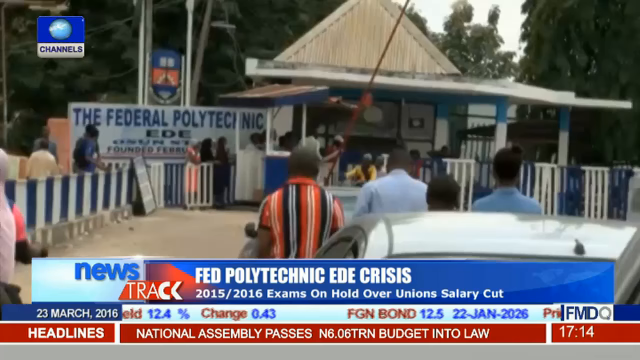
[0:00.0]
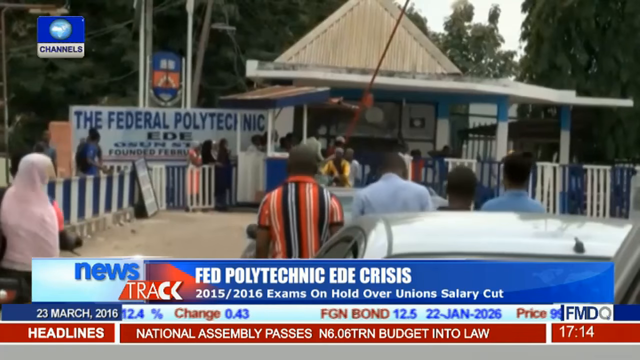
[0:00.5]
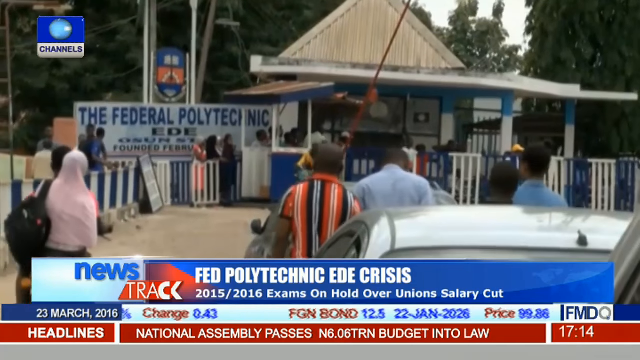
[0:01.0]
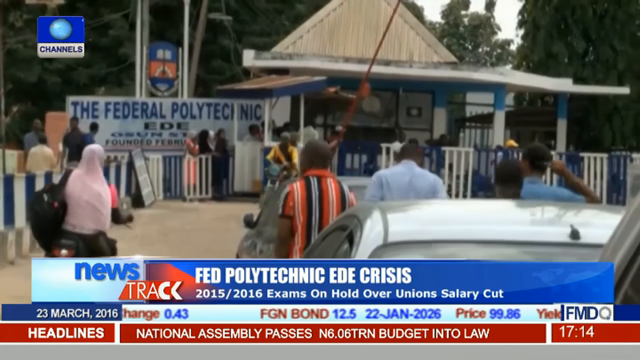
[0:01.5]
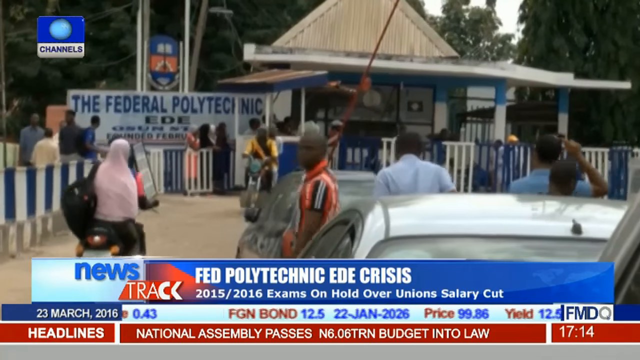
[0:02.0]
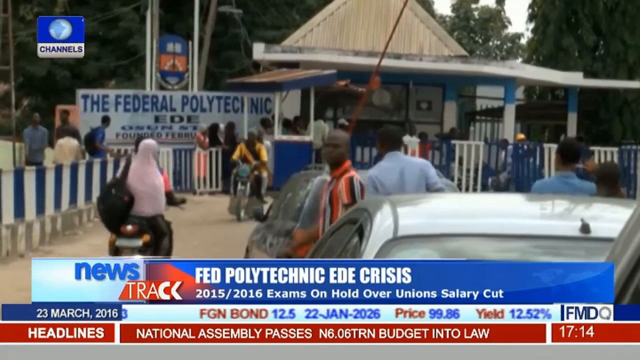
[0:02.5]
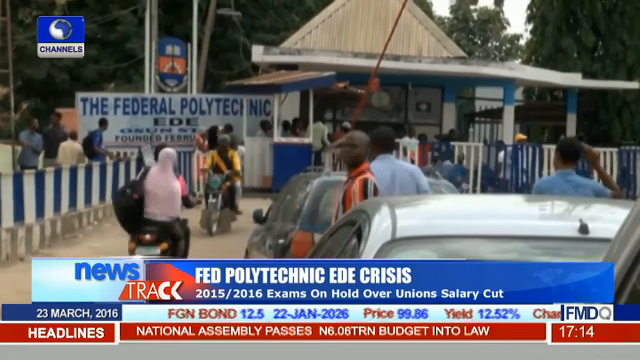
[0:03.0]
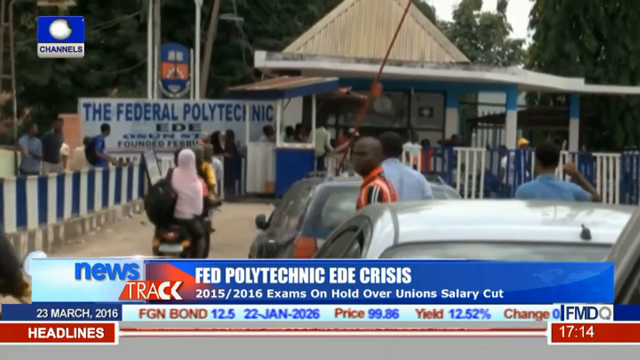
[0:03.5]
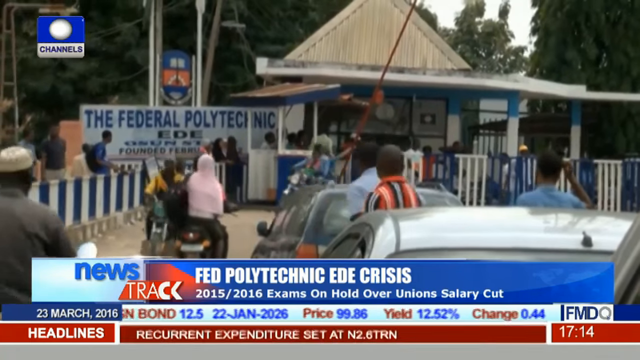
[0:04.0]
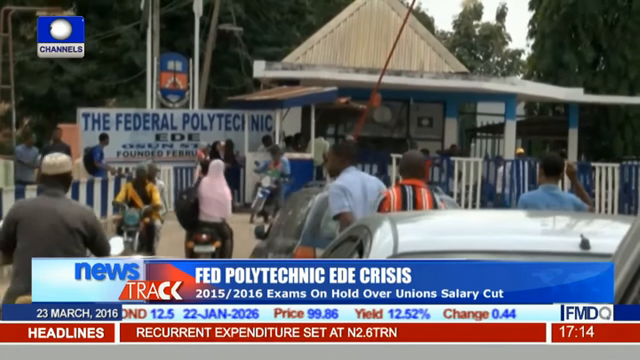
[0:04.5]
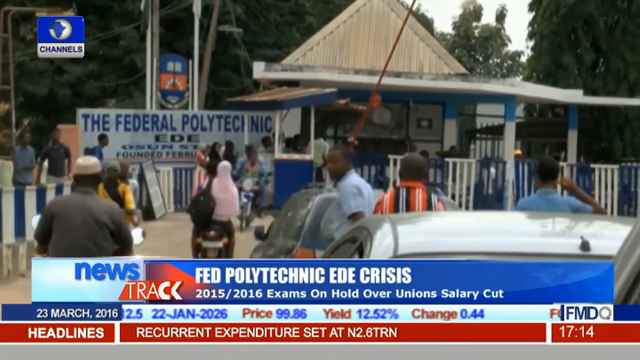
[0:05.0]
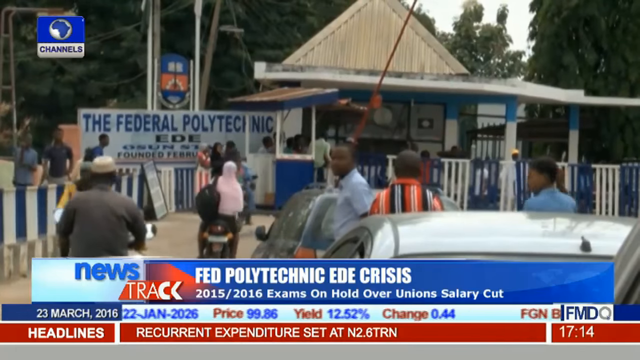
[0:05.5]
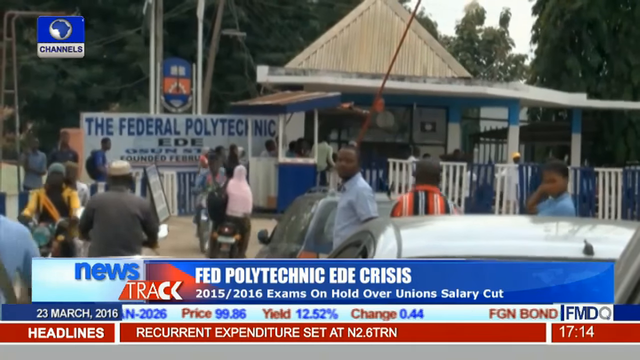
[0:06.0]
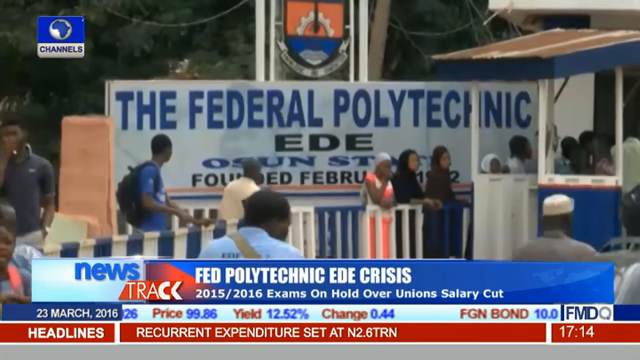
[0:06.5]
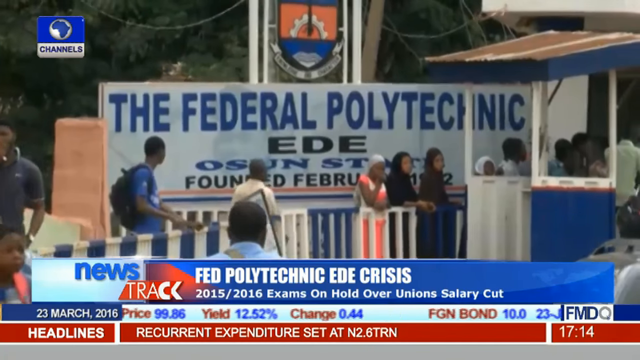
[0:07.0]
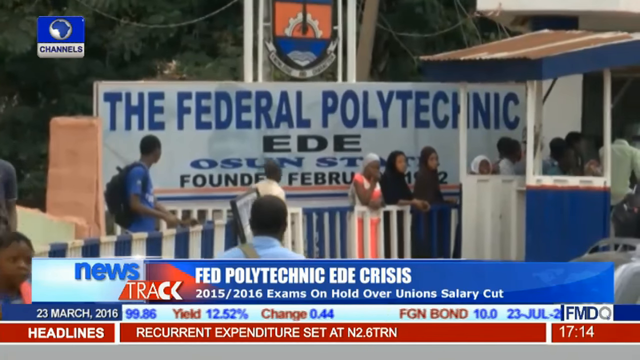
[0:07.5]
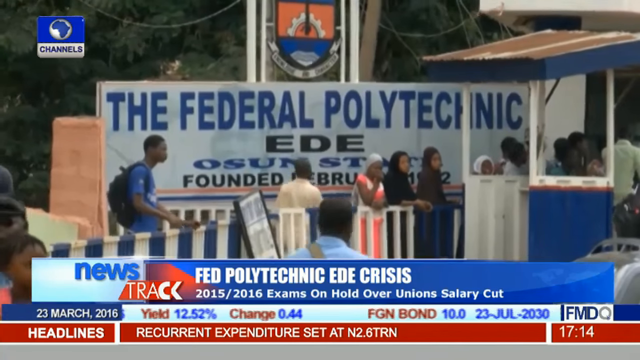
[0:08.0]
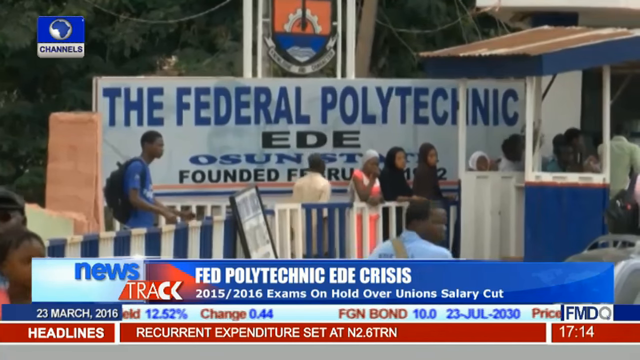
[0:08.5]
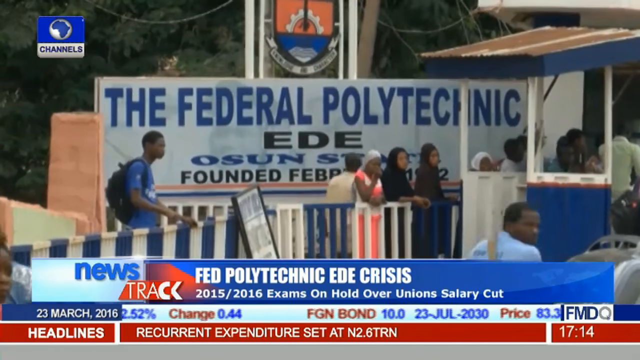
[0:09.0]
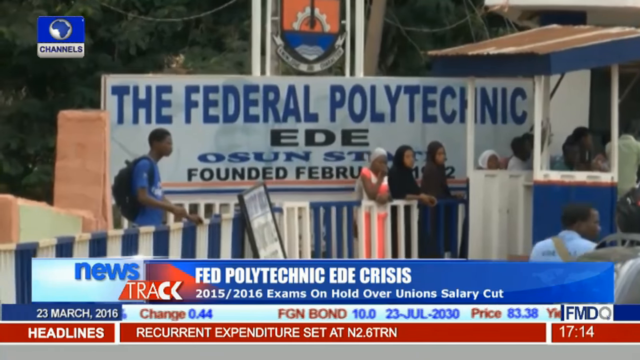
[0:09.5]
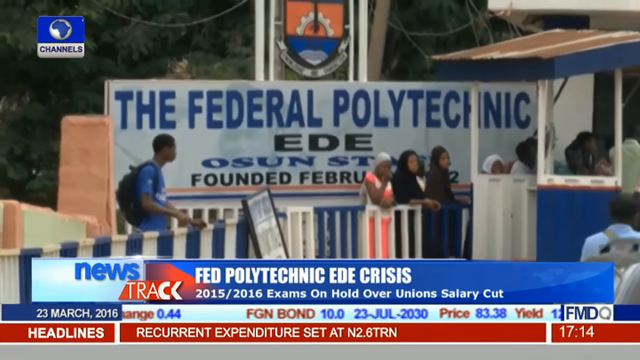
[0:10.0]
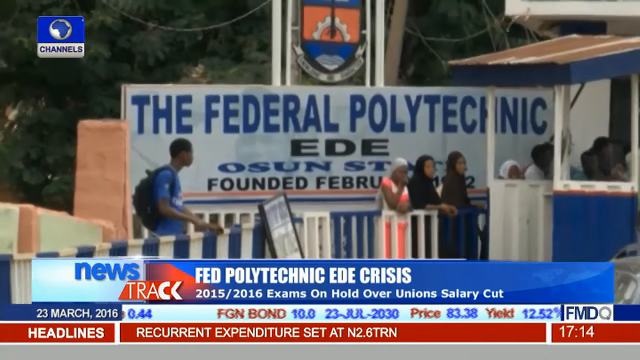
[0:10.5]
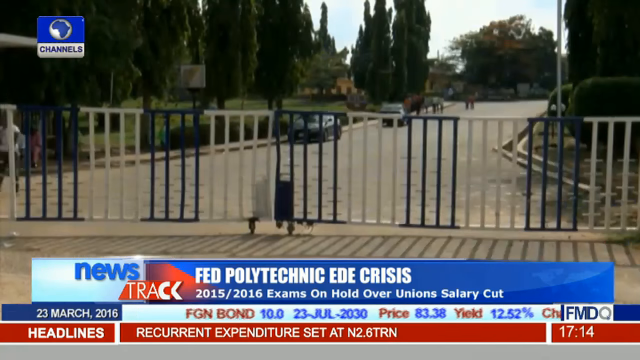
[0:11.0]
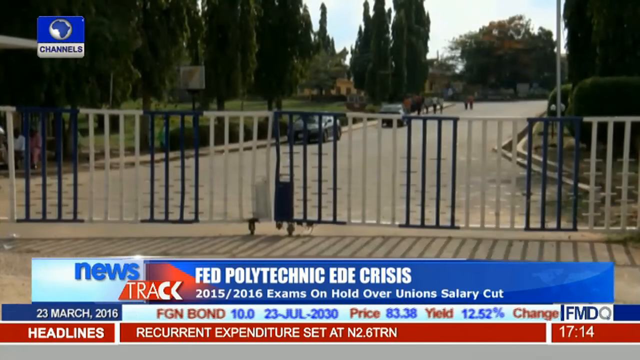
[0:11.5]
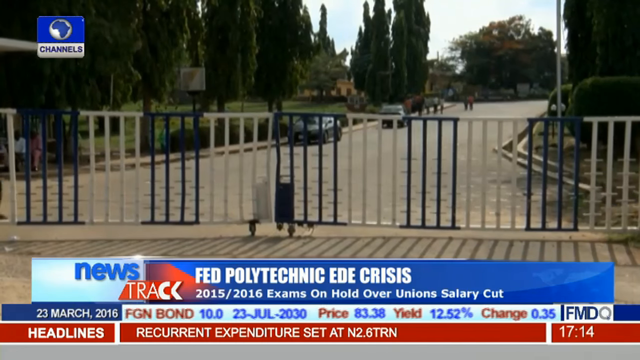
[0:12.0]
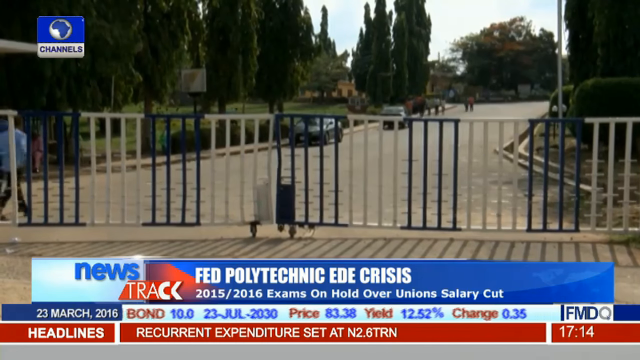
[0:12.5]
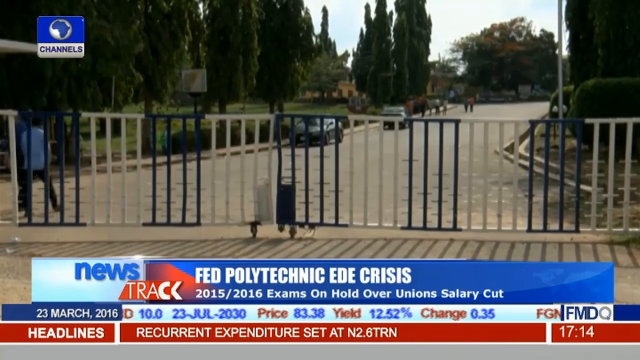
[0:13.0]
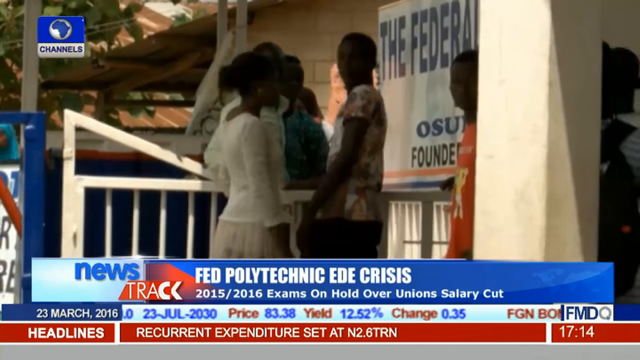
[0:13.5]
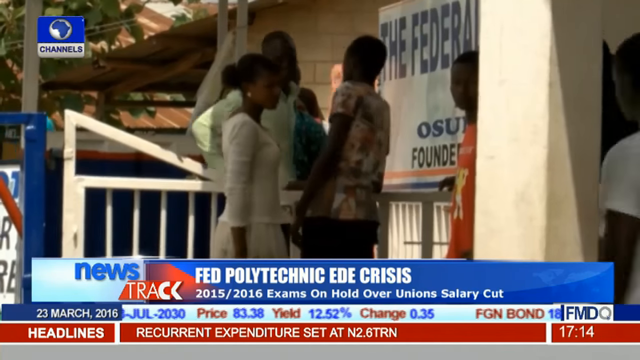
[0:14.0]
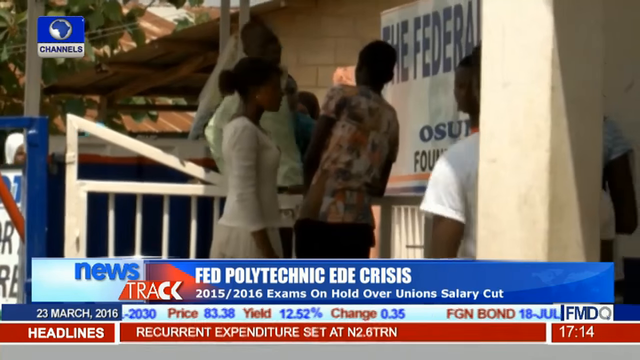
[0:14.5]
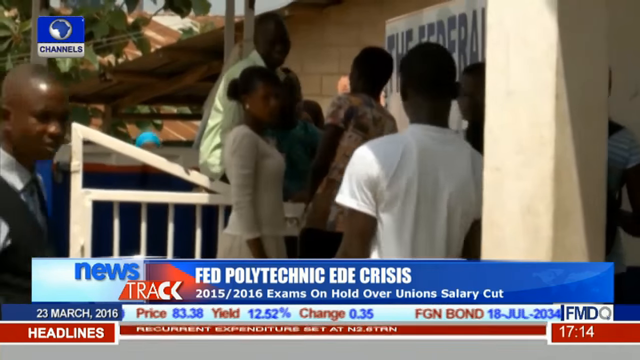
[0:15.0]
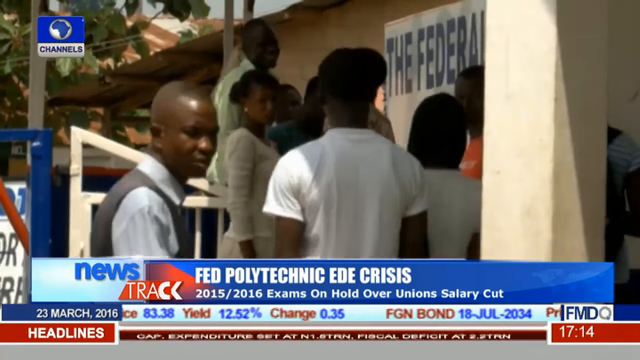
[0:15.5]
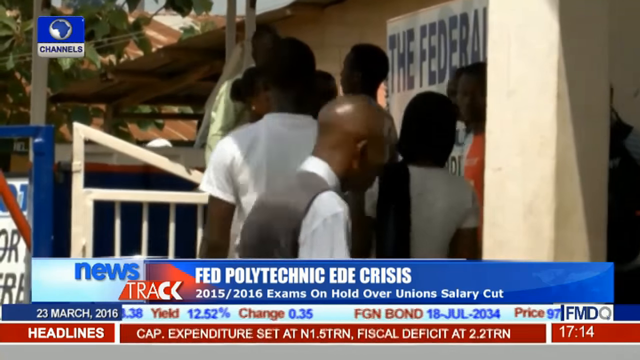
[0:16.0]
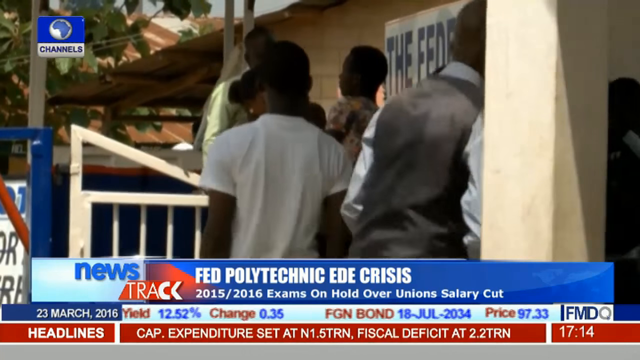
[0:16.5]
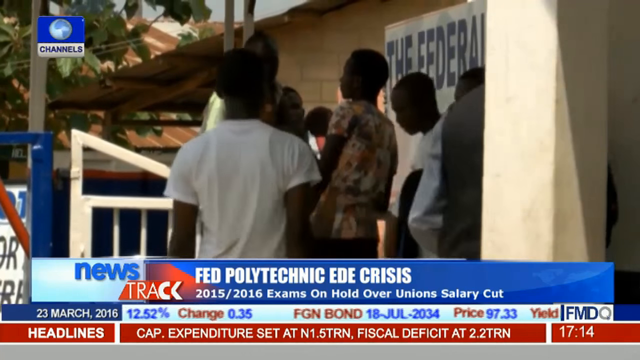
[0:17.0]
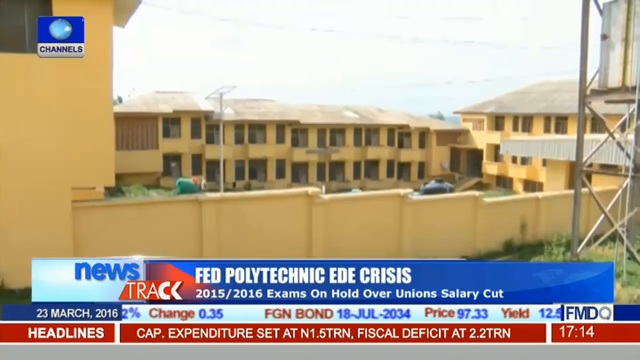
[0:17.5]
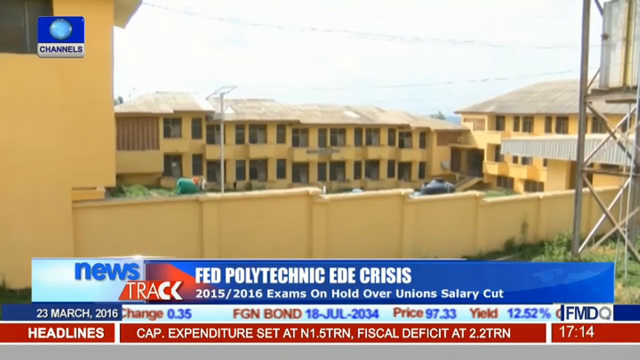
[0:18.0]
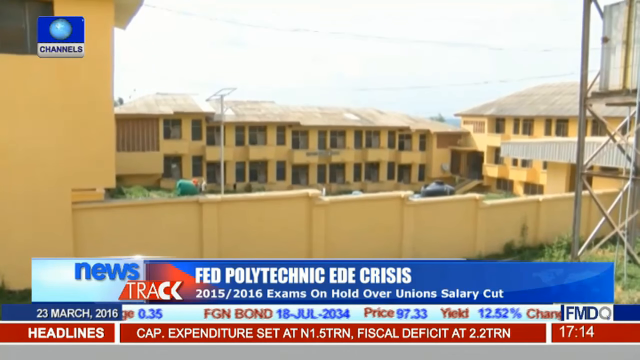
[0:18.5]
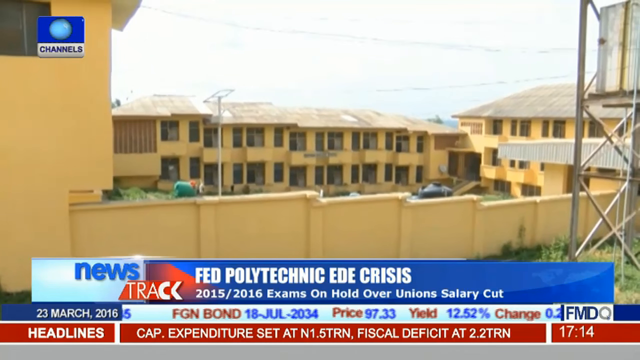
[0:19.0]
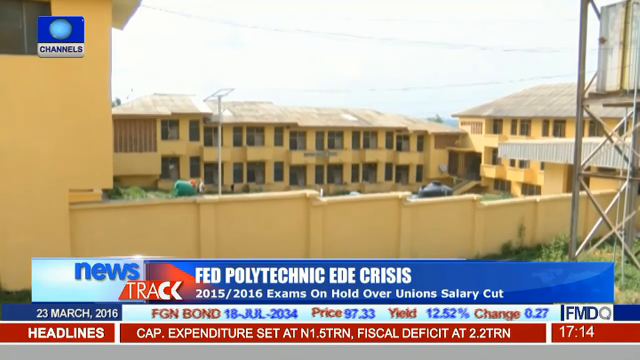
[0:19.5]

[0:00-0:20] The video shows what looks like the Federal Polytechnic EDE hut, with some gates up around it. A few women ride scooters through the parking lot up to the hut. The country appears to be in Africa. An animated headline at the bottom of the screen reads 'Newstrack Fed Polytechnic EBE Crisis', and a news channel logo in the top left of the screen is possibly channel 8. Young people gather and sit up on a wall, as if waiting for something to happen. Next comes what looks like an apartment complex with a high wall around it, and a Federal Polytechnic EBE banner. Young people with backpacks hang around the hut, and a car is in the foreground in front of the hut with a few men walking towards it.